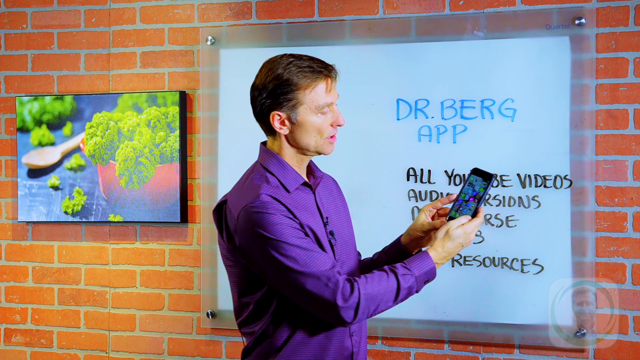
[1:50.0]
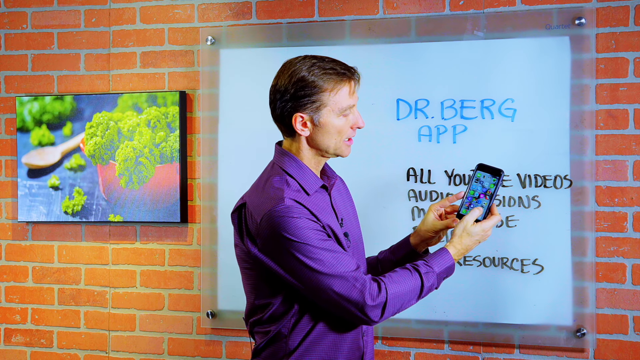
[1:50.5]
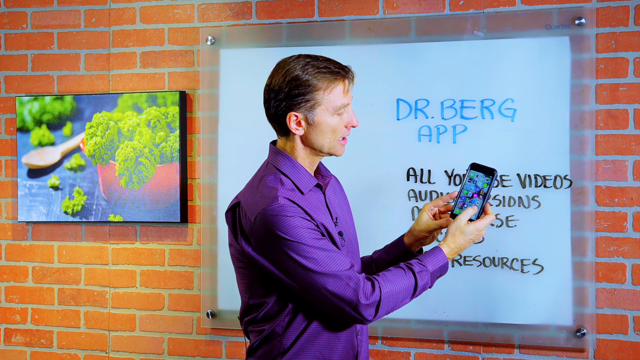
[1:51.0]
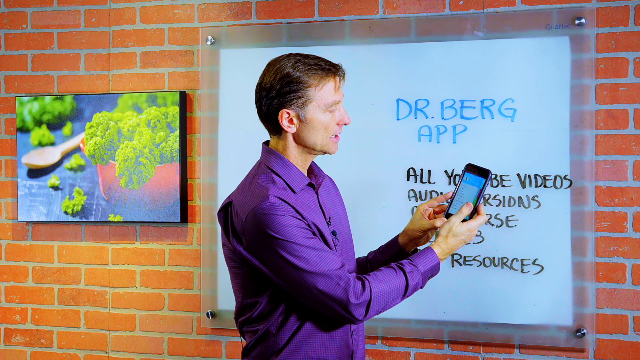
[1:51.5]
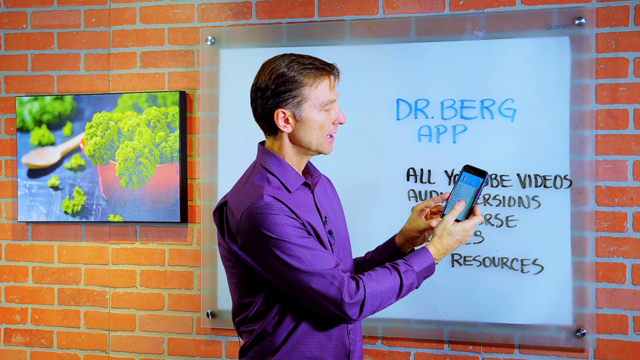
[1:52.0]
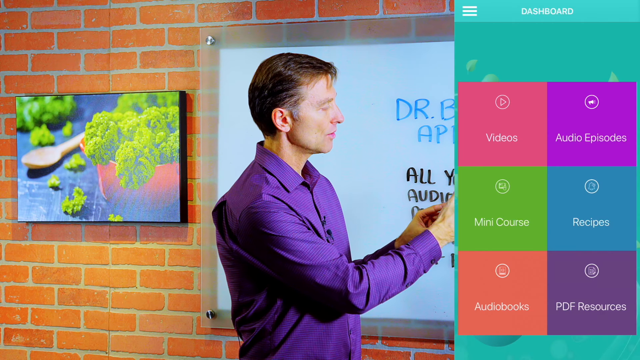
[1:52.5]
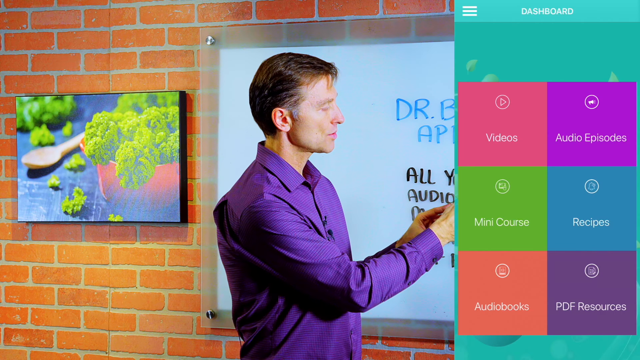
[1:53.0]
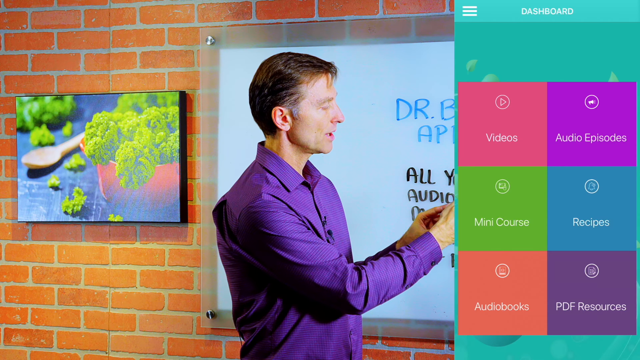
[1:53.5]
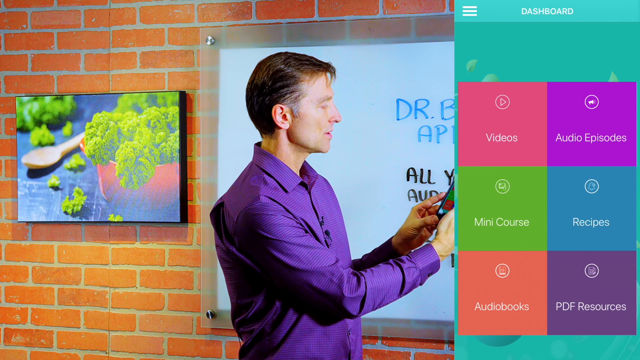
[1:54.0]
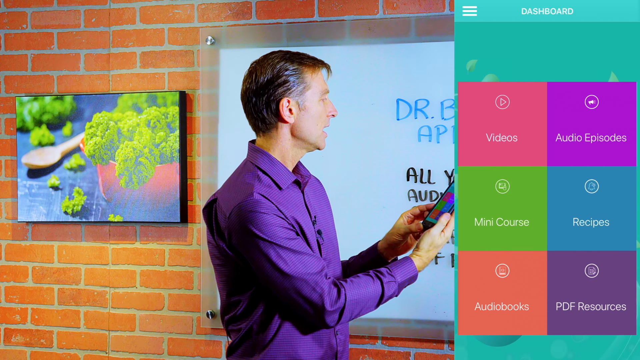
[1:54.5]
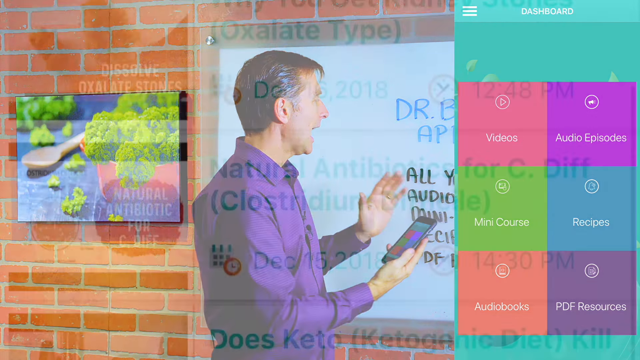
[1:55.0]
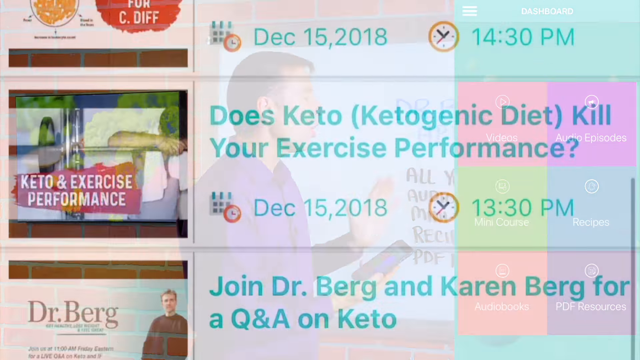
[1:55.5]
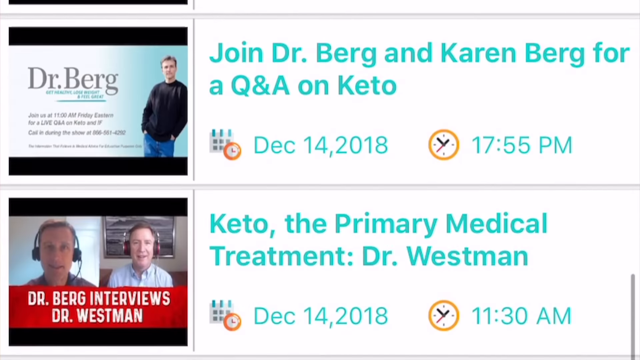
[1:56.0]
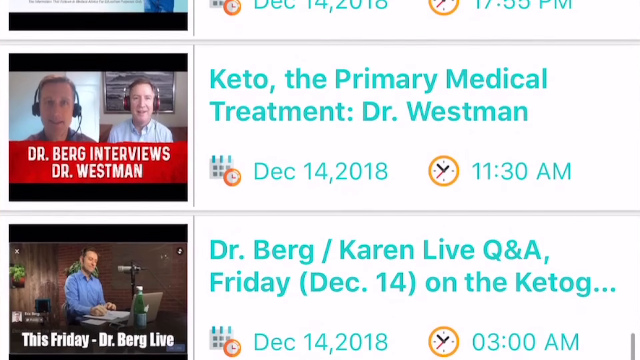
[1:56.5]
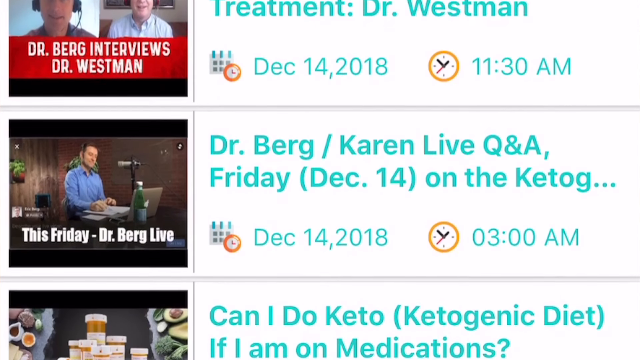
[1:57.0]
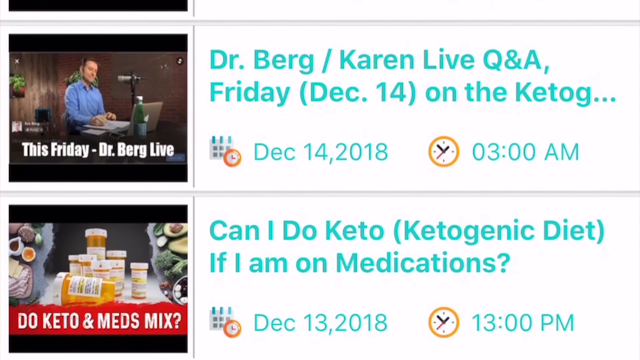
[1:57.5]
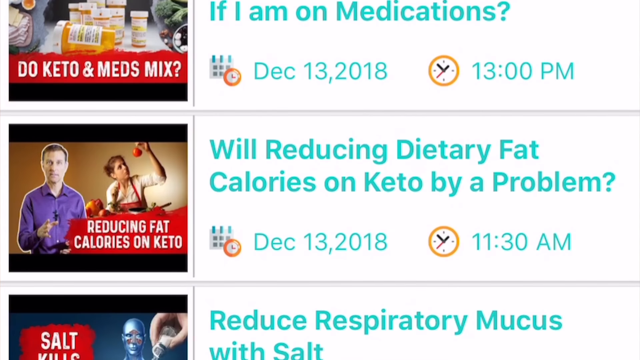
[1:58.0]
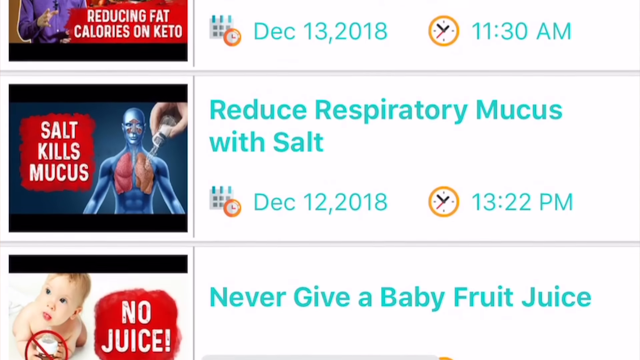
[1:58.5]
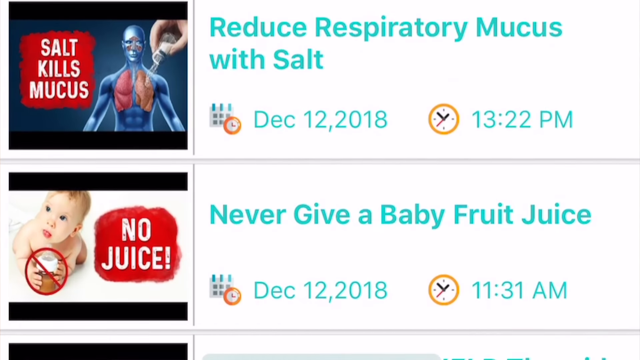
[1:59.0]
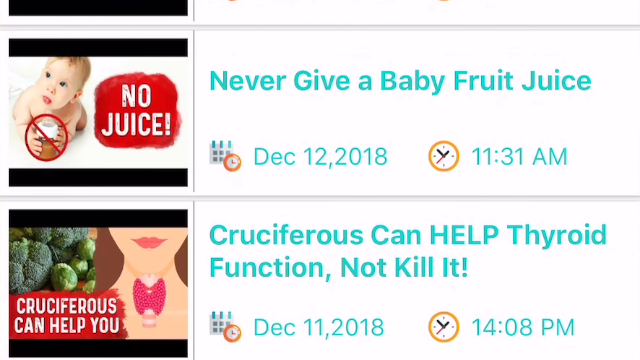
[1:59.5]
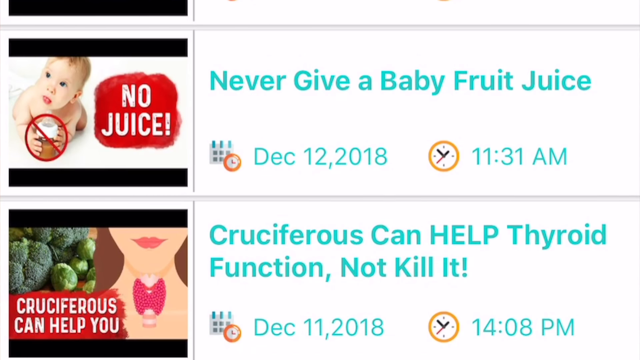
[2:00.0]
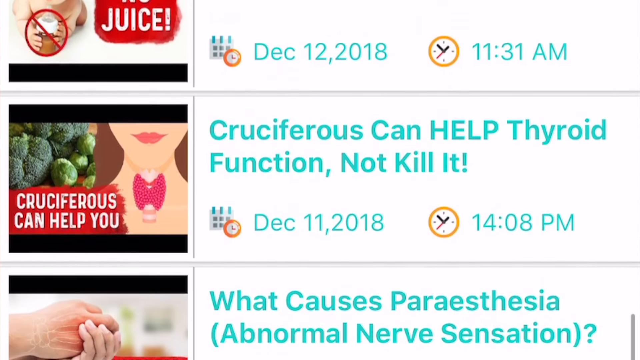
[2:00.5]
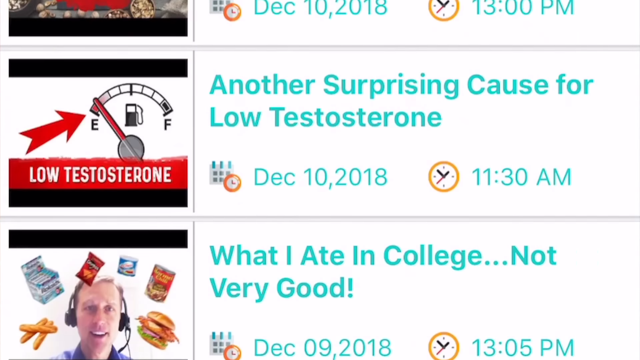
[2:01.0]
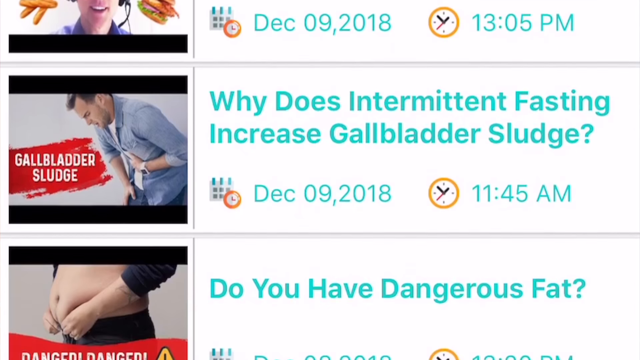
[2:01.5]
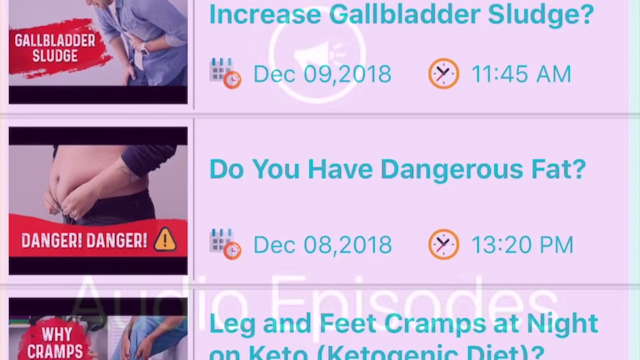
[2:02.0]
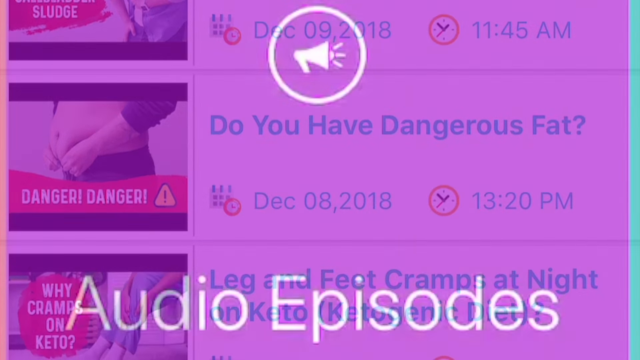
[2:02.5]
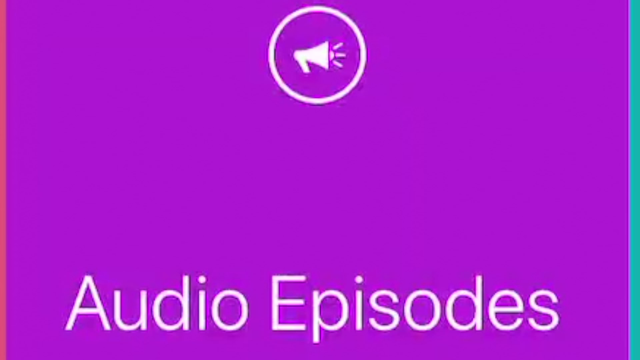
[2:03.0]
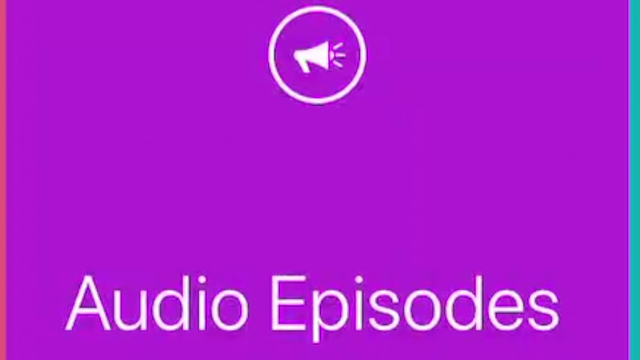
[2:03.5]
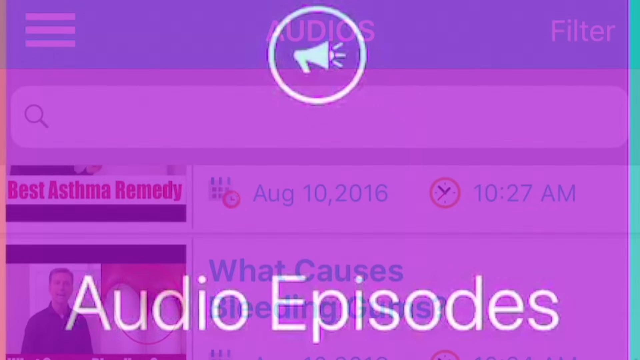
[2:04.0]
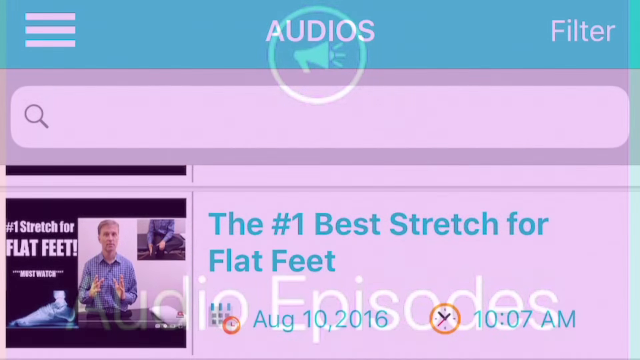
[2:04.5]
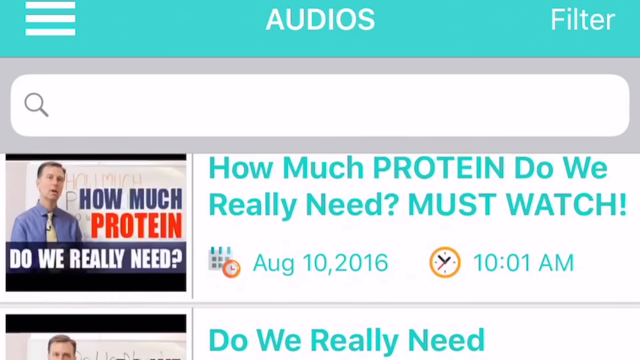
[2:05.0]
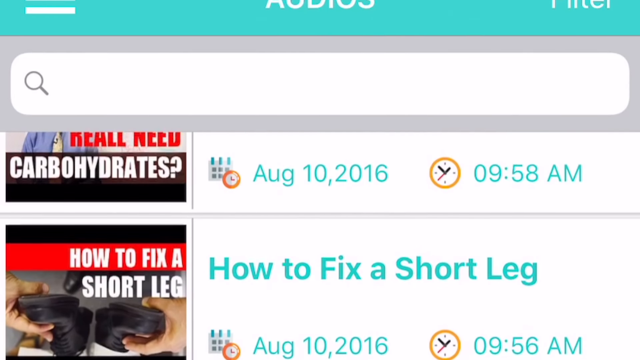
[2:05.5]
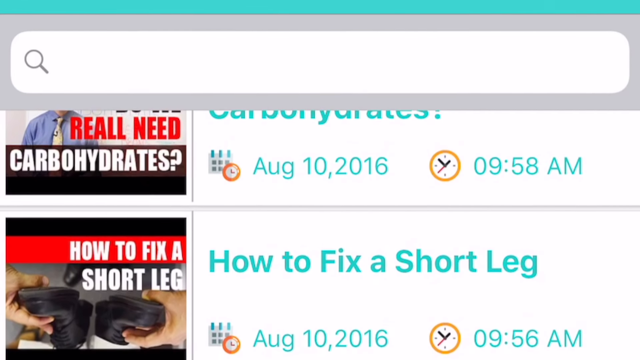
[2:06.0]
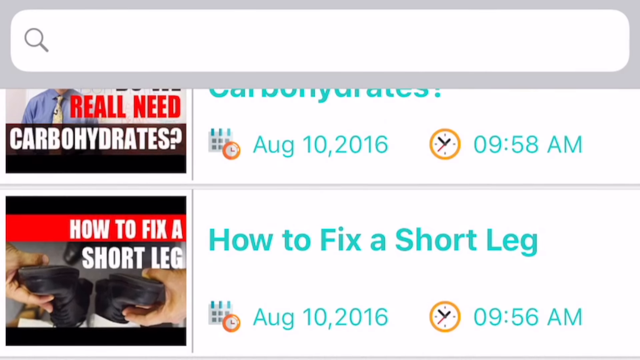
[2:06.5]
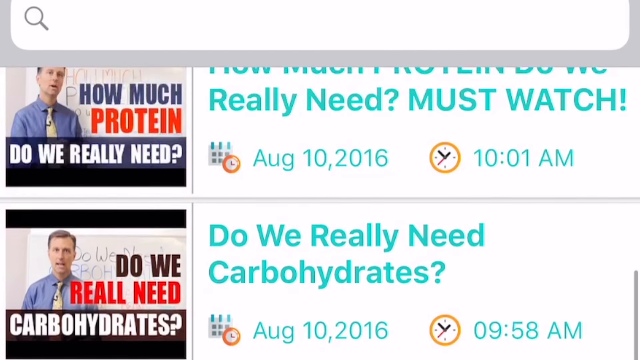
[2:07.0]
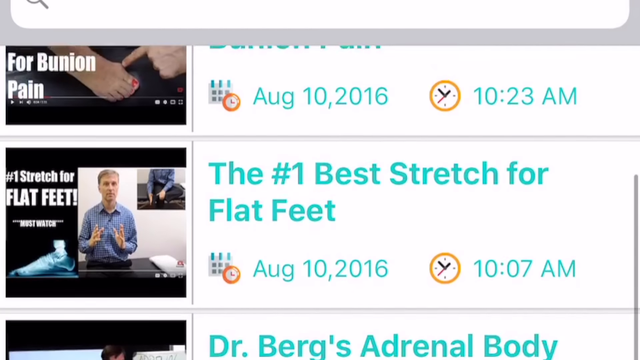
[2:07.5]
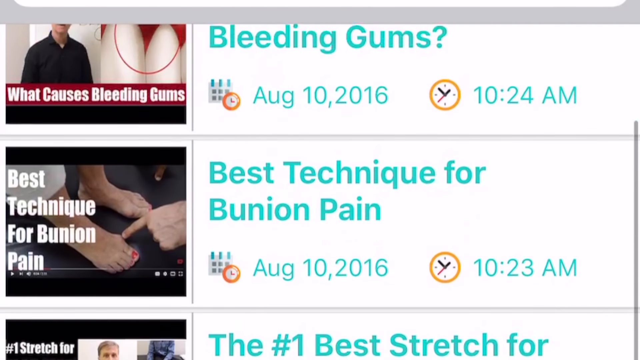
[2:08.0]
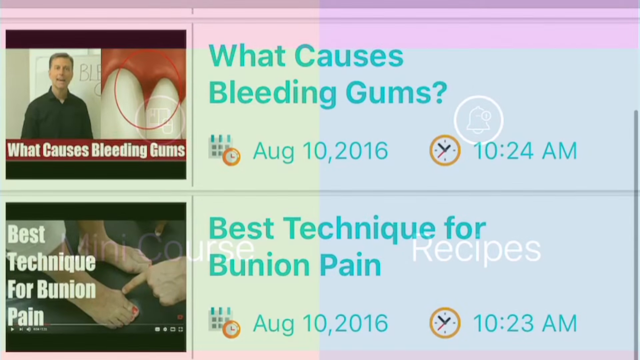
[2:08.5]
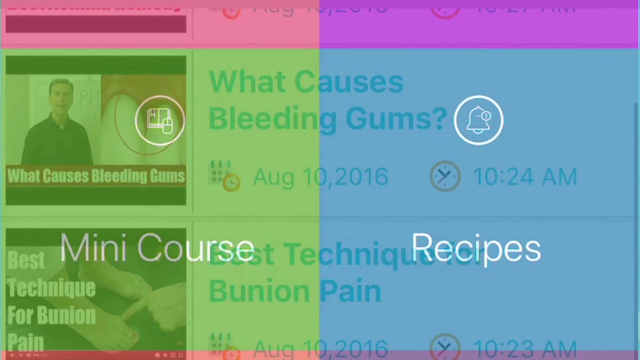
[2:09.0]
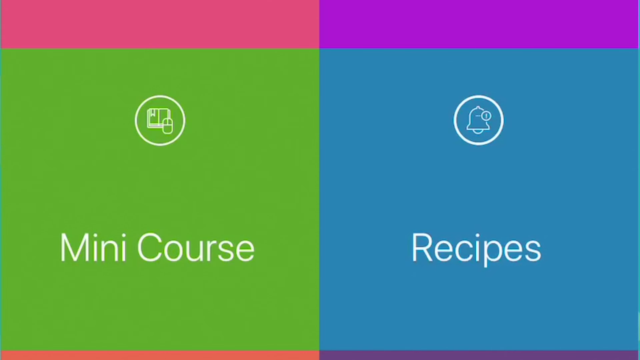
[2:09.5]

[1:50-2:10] The man in the purple button-down shirt holds a smartphone in both hands, an image on its screen, and talks while looking at it. A graphic appears on the right margin of the video: a screenshot of the phone screen with the header "dashboard", a three-bar menu icon, and six squares arranged two side by side in three rows. The first reads "video" in a sort of rose pink; the second "audio episodes" in a sort of red violet; the second row holds "mini course" in lime green and "recipes" in a sort of aquamarine; the third row holds an "audio" block in an orangish color and "PDF Resources" in a darker purple. The video then scrolls through various thumbnails and an index of videos, such as "join Dr. Berg and Karen Berg for a Q&A on keto" with the date December 14th, 2018 and the time 1755 p.m., possibly web episodes. It continues scrolling through various topics, switches to the menu for audio episodes, and returns to scrolling through video episodes such as "how to fix a short leg." It then goes back to a close-up screenshot of some featured topics.